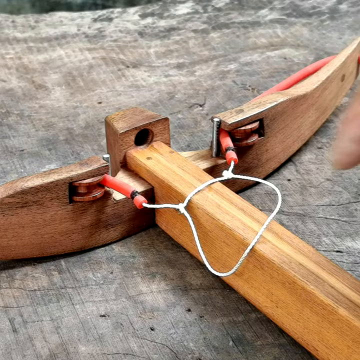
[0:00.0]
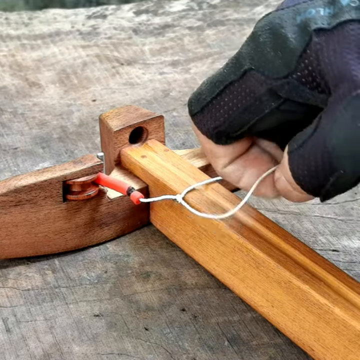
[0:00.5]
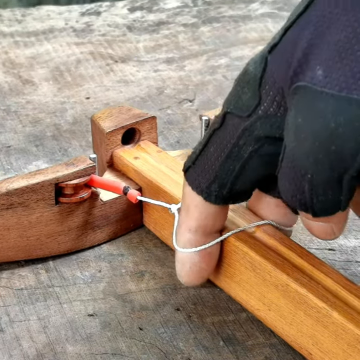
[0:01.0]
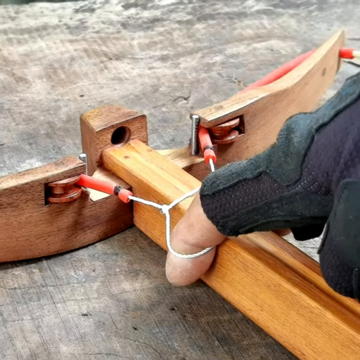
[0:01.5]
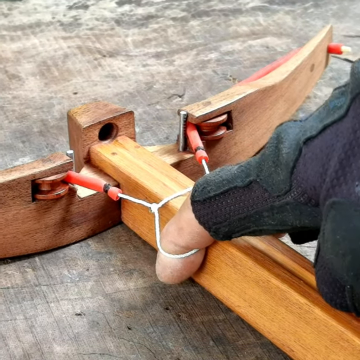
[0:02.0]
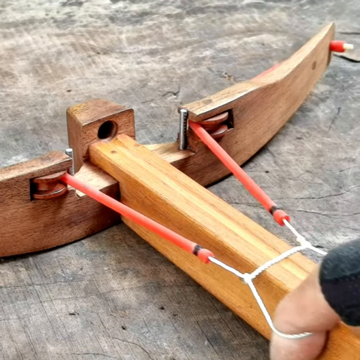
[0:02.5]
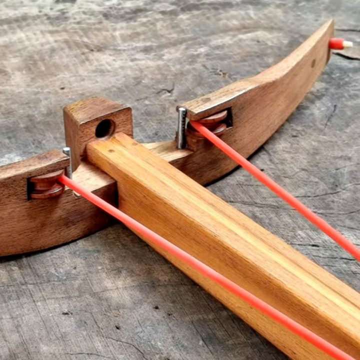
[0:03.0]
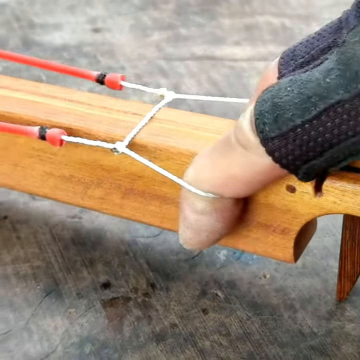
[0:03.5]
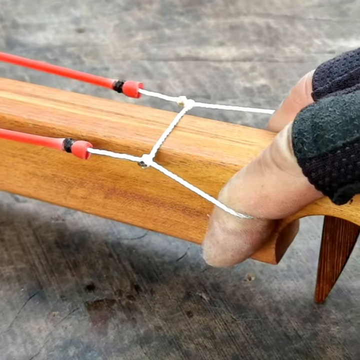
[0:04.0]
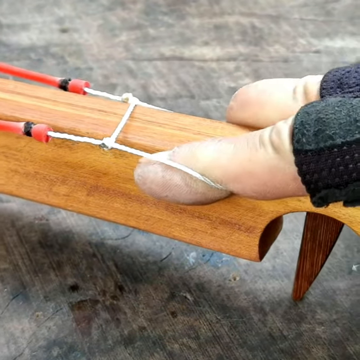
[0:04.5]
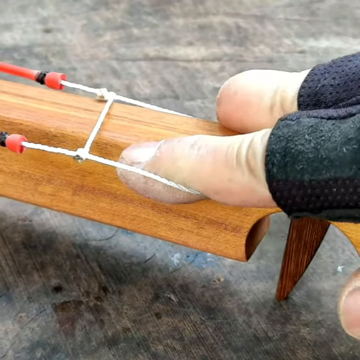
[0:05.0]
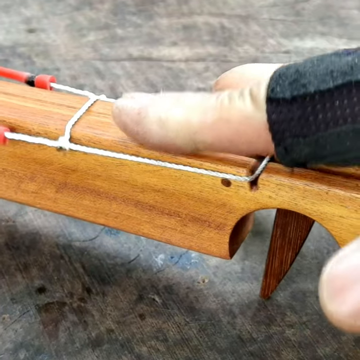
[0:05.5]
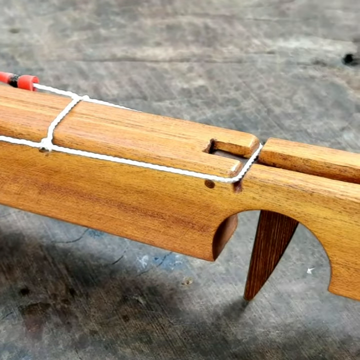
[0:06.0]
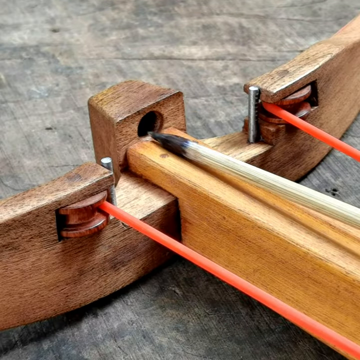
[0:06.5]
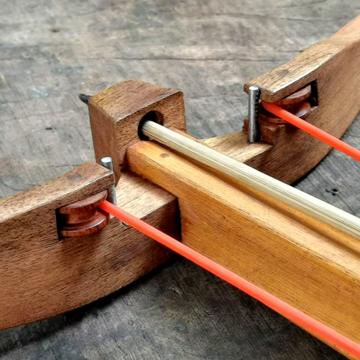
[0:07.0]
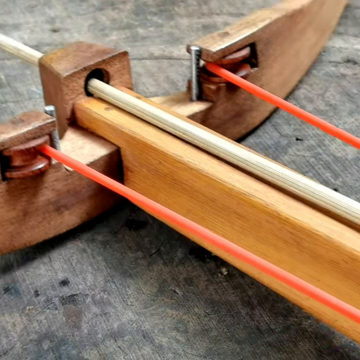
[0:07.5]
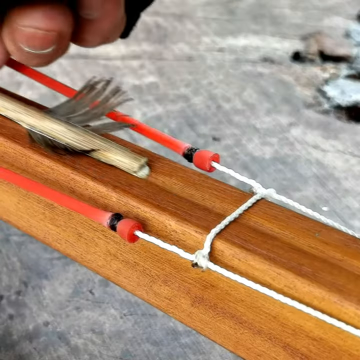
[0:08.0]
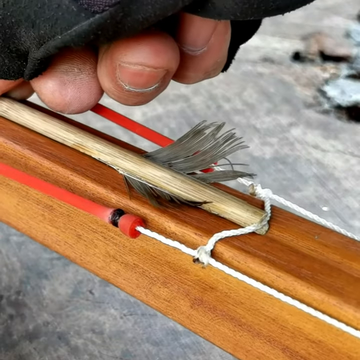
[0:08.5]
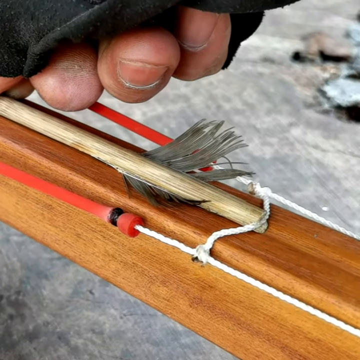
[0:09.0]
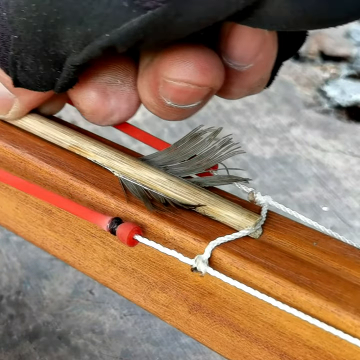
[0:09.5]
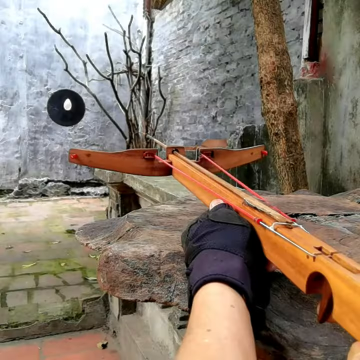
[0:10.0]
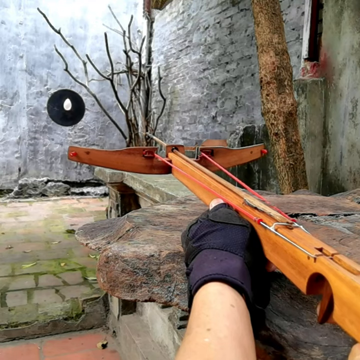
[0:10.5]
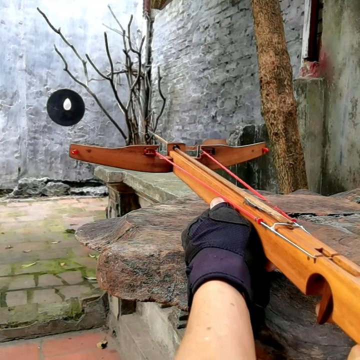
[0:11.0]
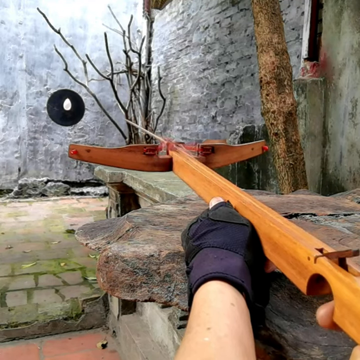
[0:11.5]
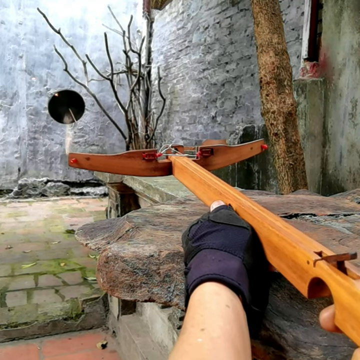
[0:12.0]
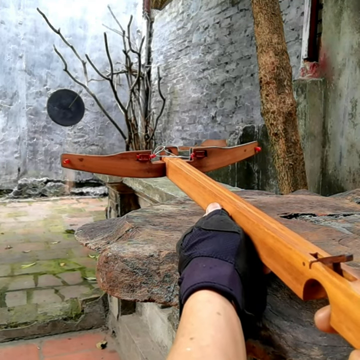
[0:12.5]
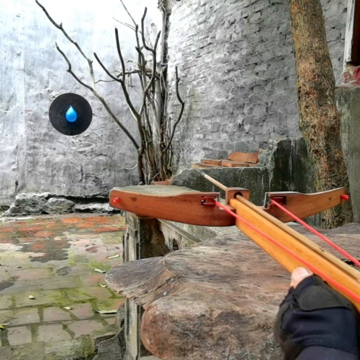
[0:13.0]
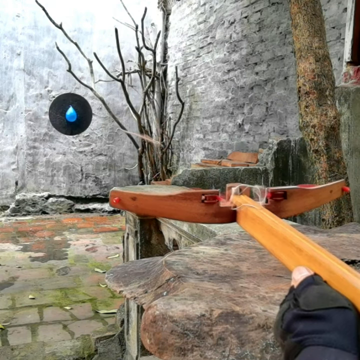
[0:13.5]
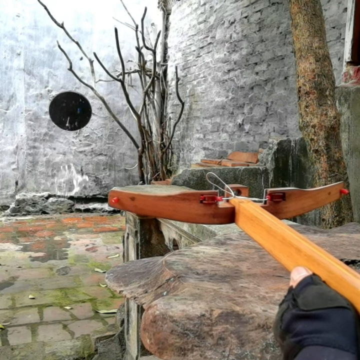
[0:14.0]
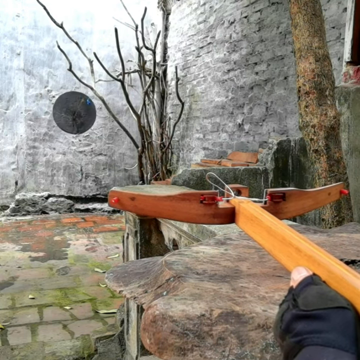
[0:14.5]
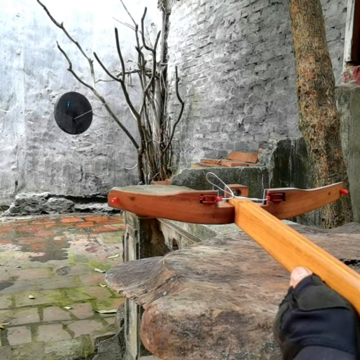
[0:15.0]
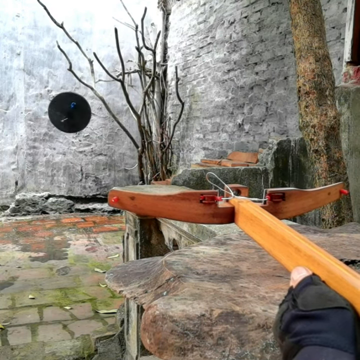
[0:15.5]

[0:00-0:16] A person holds an object that looks like a crossbow. A small white string with a loop in it is shown on the left side of the crossbow, and the person has a finger through the loop. The person pulls back, and the rubber band running from both sides is orange. The person pulls the string as far back as it can go until it latches into an indented space. The person then slides a utensil through the middle hole at the top of the crossbow and pulls an object backwards again. Next, the person aims the wooden crossbow at a target that looks like a white balloon hanging from the center of a black circle. The person shoots the balloon perfectly; it falls to the ground and turns to dust. The person then shoots a blue balloon, and the water hits the ground immediately.